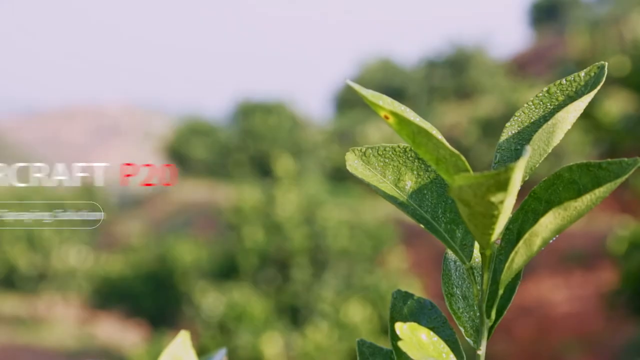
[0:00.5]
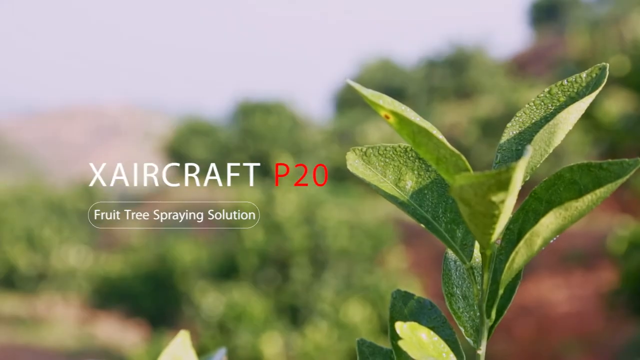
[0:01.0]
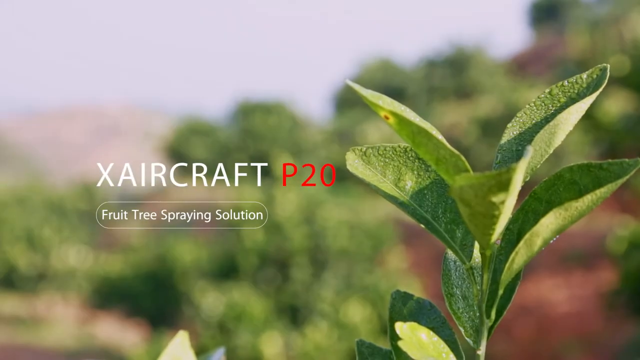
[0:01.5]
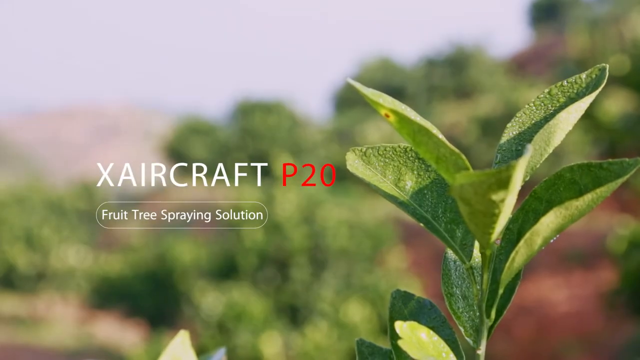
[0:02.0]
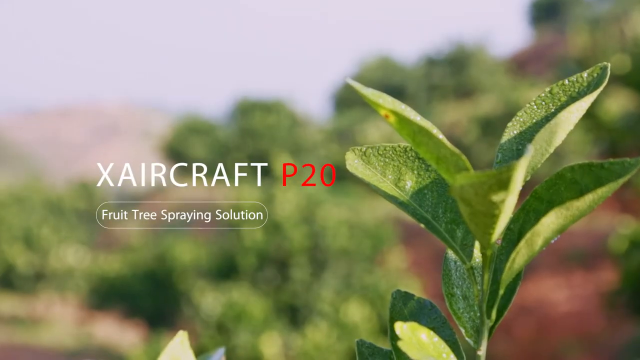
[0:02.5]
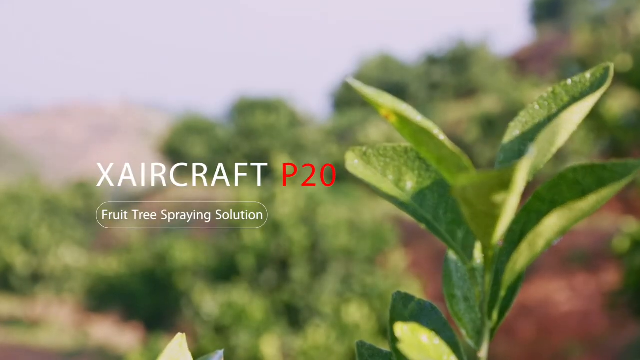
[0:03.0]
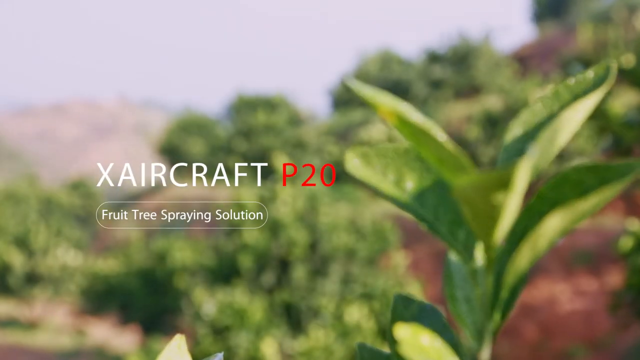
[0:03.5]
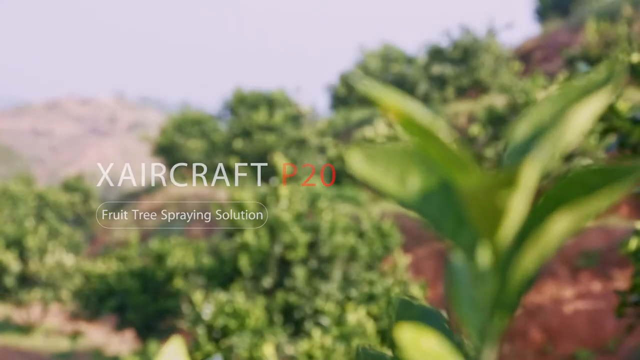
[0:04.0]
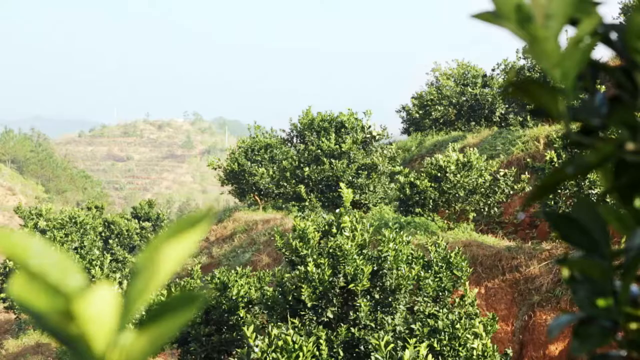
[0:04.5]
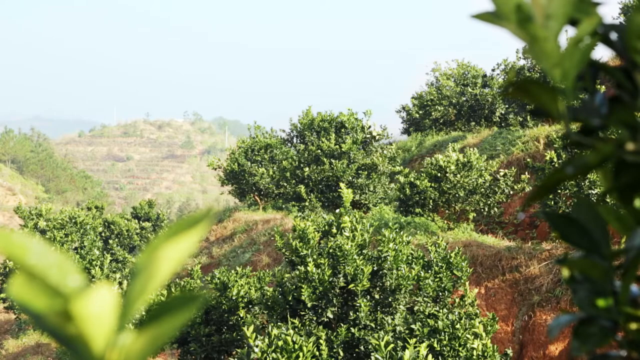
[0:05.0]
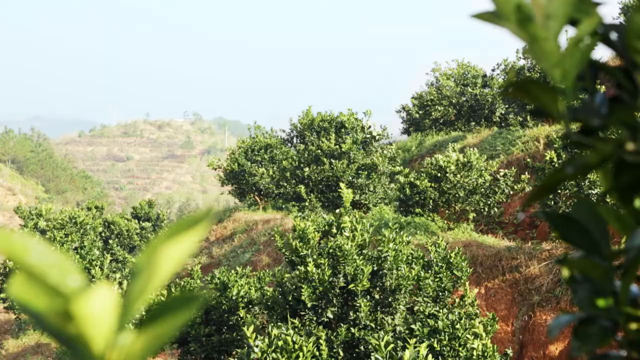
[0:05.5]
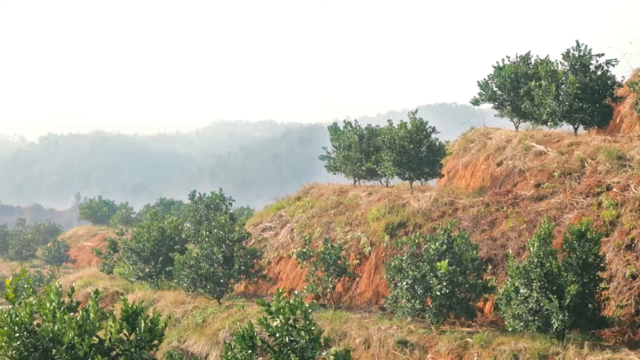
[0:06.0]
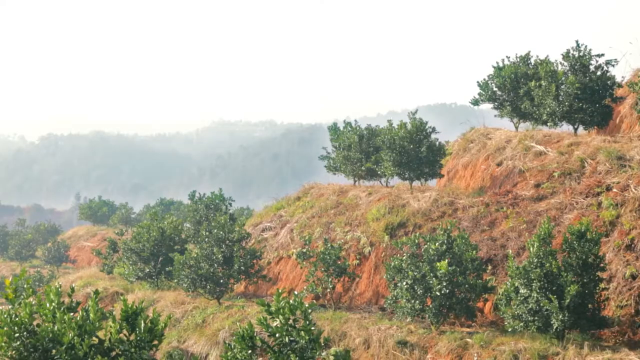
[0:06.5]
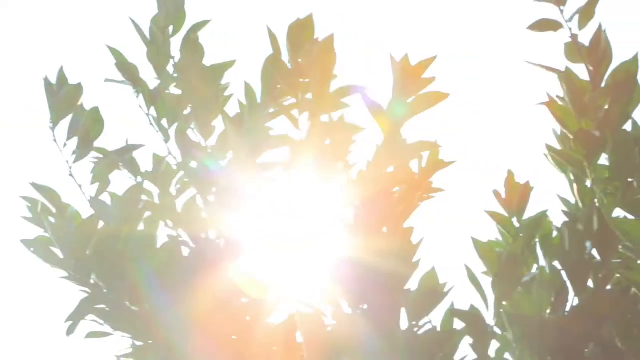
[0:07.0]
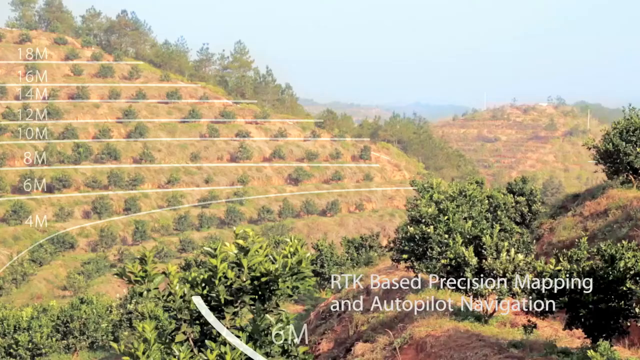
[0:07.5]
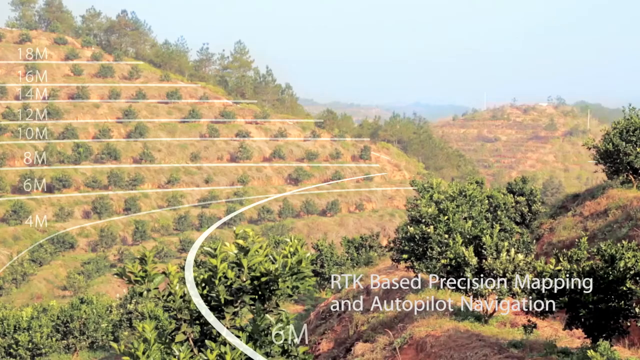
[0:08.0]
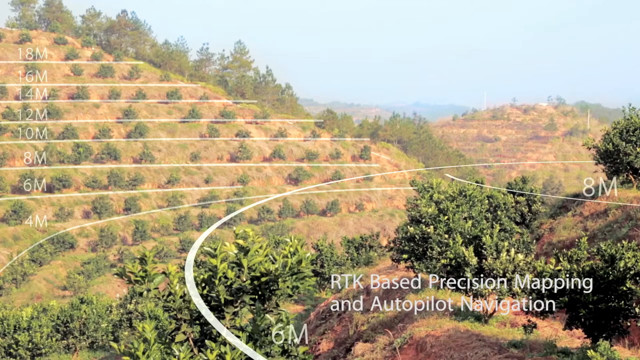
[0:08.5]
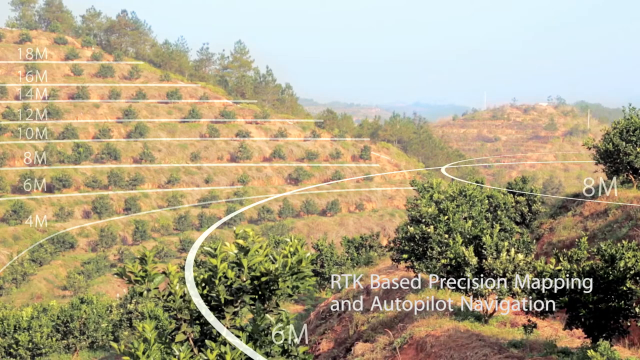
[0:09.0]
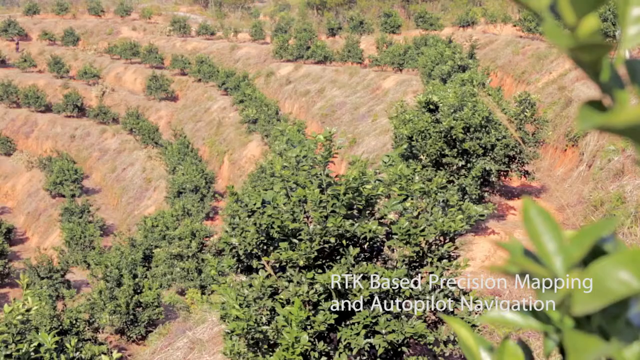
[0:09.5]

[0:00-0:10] The video opens on a nature scene. On the right side is some sort of plant with leaves covered in dew. On the left side, text reads "X-Aircraft P-20 Fruit Tree Spraying Solution," with an out-of-focus view of foliage behind it. The camera cuts to rolling hills with bushes, then to another view of terraced hills with small trees growing on the flat portions, and then to a larger view of these terraced hills, with meter markers overlaid on the side of the video. Another view of the hills follows, with text at the bottom right reading "RTK-based Precision Mapping and Autopilot Navigation," and height lines begin to be drawn around the curves of the hills.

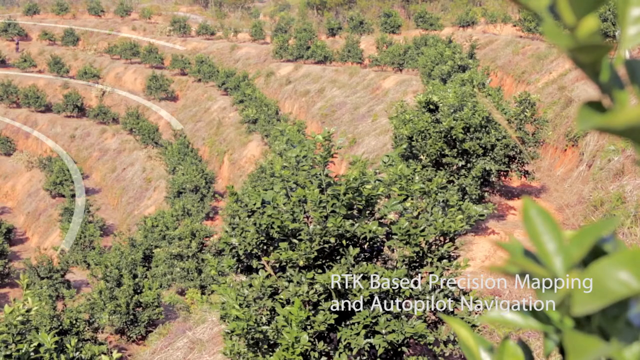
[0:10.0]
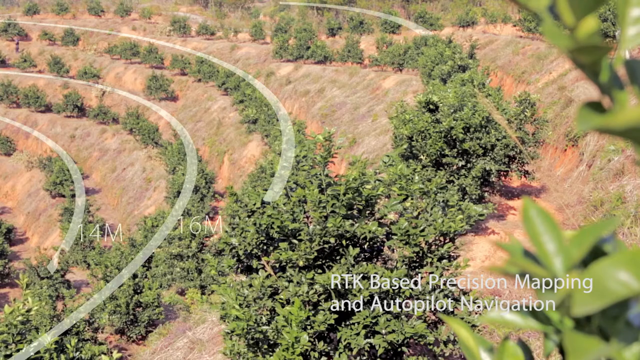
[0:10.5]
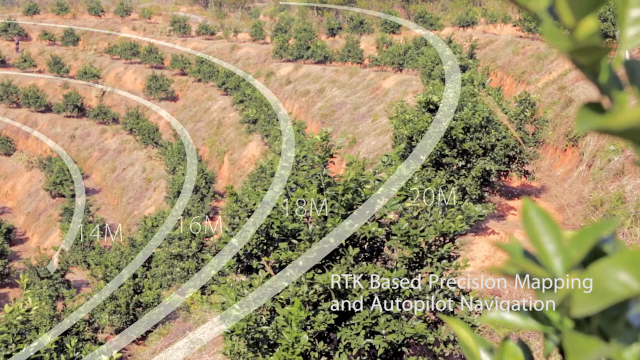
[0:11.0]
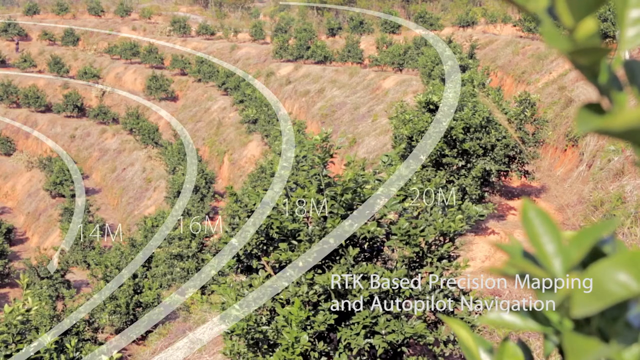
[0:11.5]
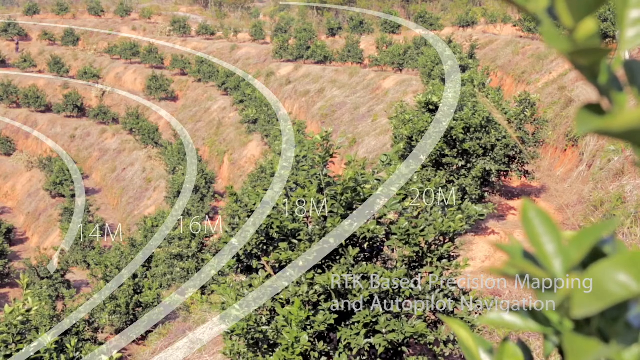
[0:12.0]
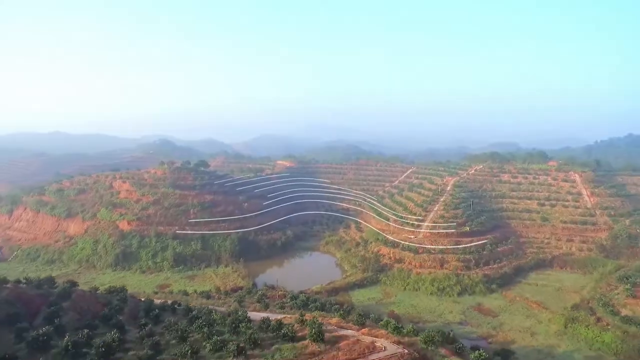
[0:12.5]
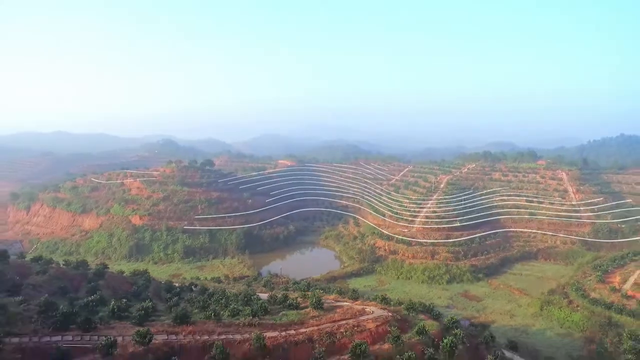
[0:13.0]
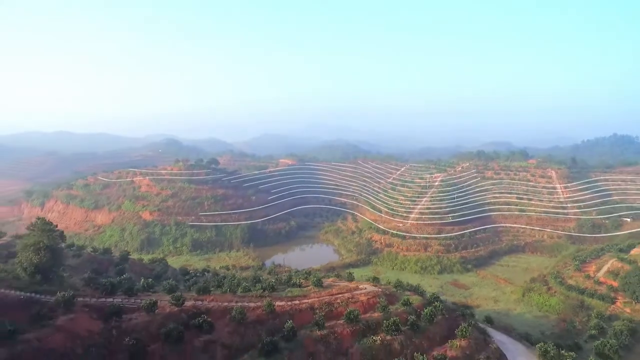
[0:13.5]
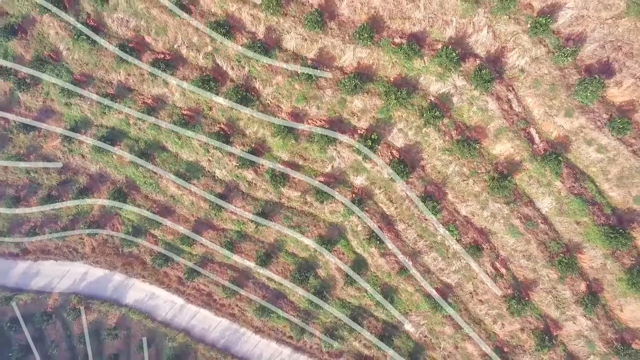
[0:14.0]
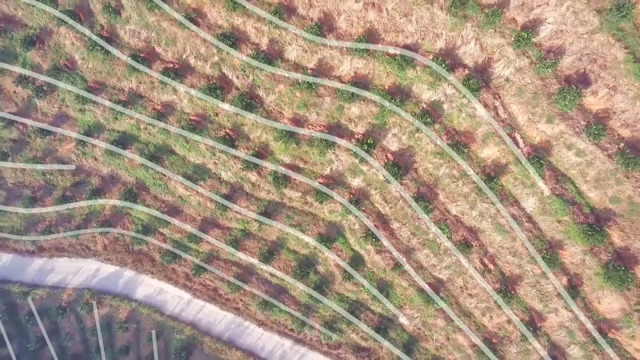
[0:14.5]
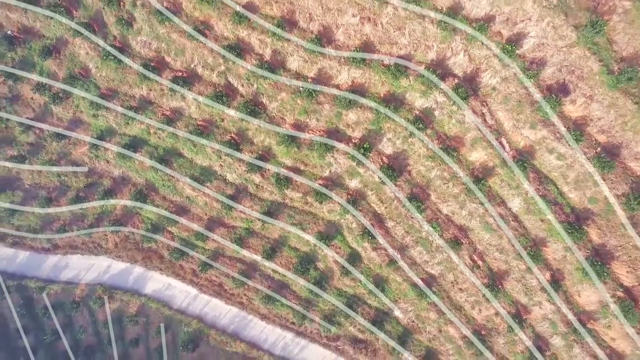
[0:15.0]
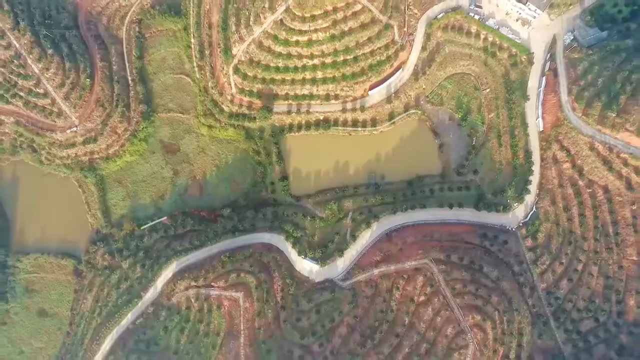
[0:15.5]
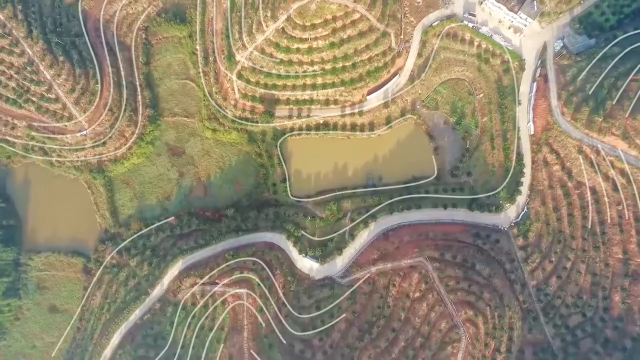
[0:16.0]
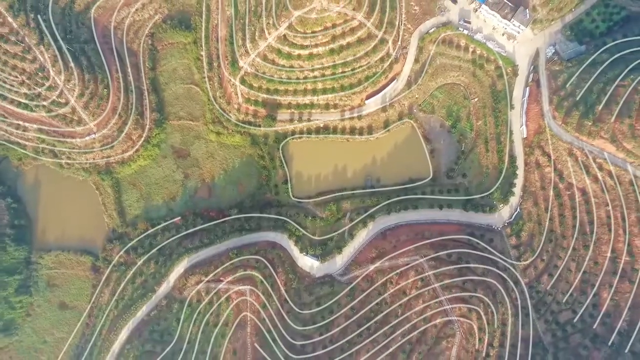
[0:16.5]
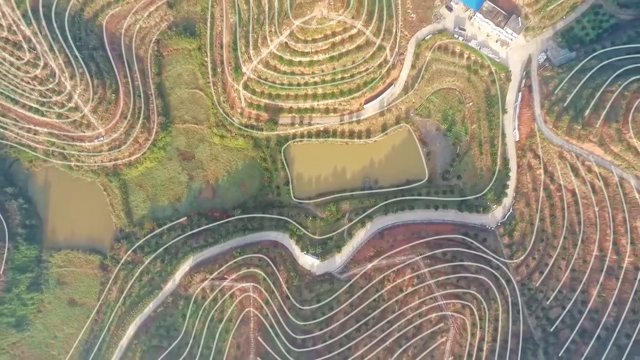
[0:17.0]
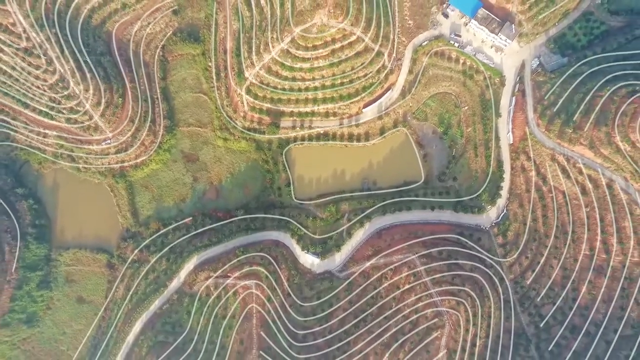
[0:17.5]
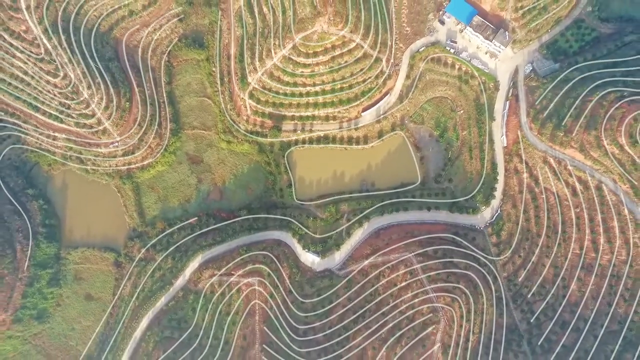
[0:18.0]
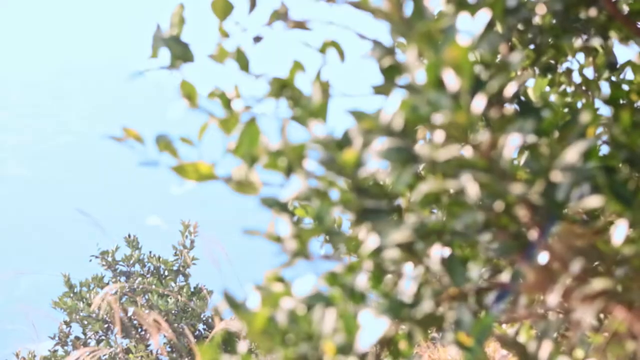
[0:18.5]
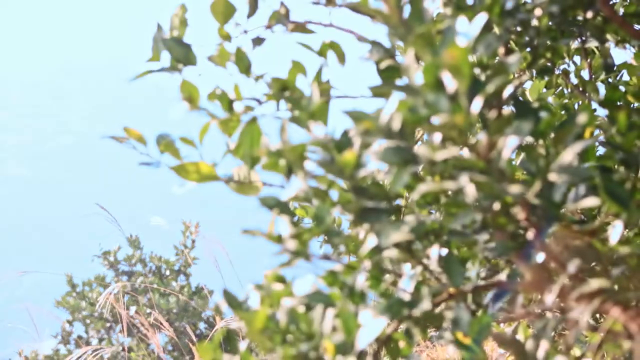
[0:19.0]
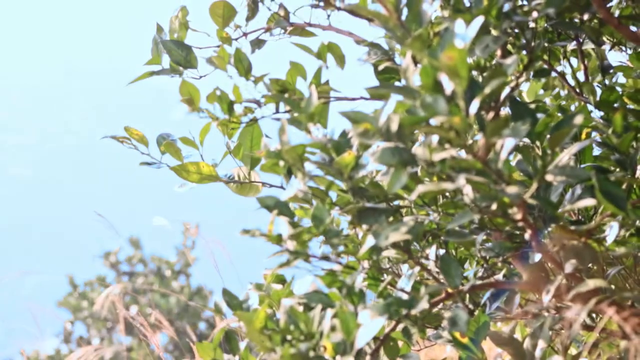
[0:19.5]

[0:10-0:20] Height markers continue to be drawn on the terraced hill. The marker on the far left reads 14 meters, and the markers go up by two each step, up to 20 meters. The video cuts to an aerial view of the terraced hills, with animated height markers being drawn across all of them, then to another aerial overhead view of the same hills. The view continues to zoom out, showing the hills with increasing height, all with height markers drawn around them. It then cuts to a close-up of a bush and very quickly cuts to another aerial overhead view.